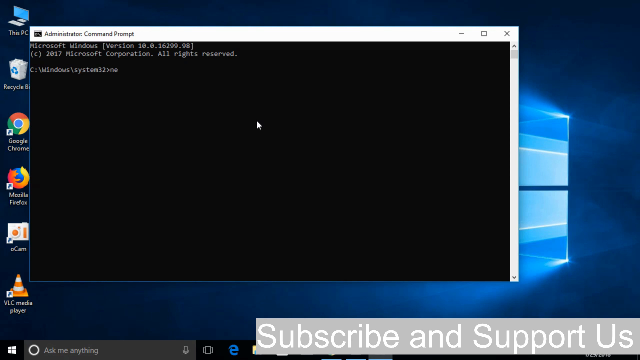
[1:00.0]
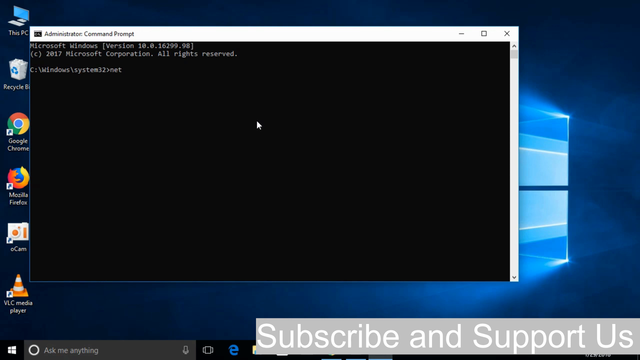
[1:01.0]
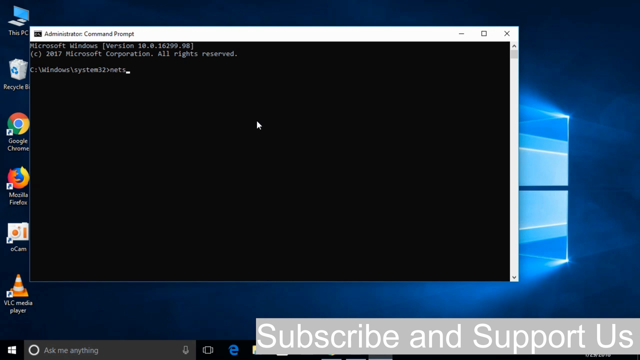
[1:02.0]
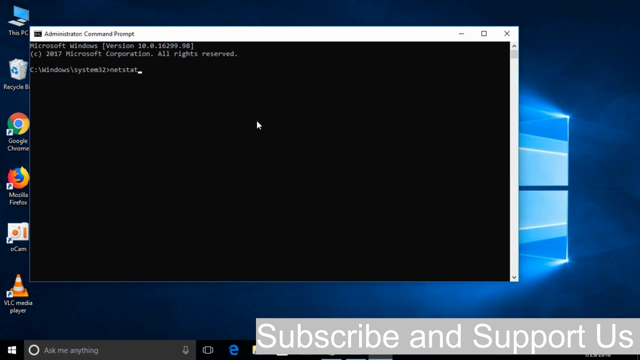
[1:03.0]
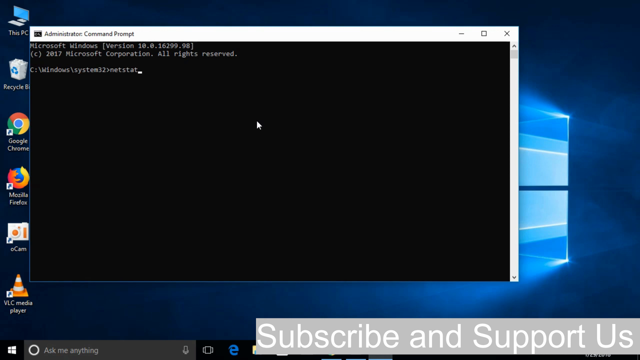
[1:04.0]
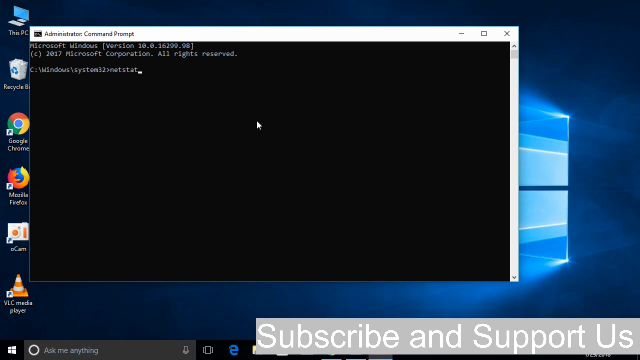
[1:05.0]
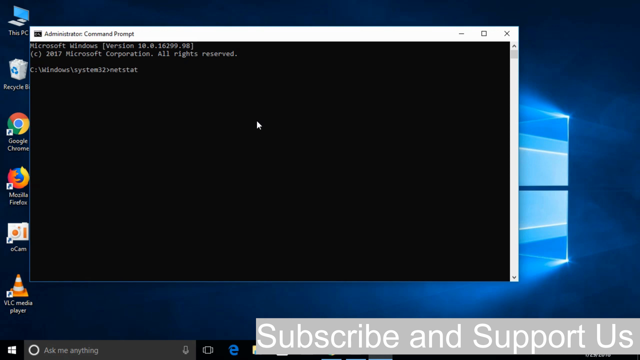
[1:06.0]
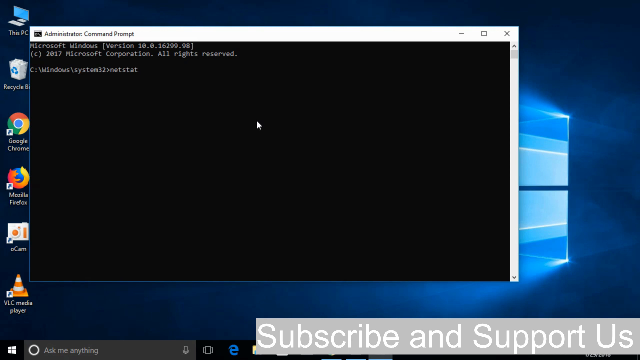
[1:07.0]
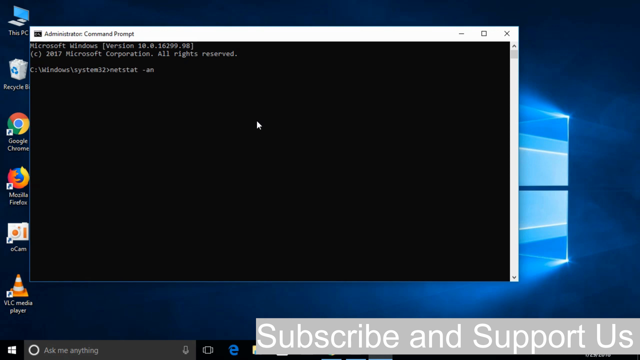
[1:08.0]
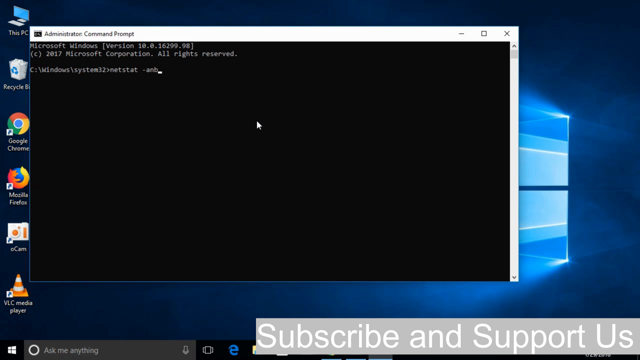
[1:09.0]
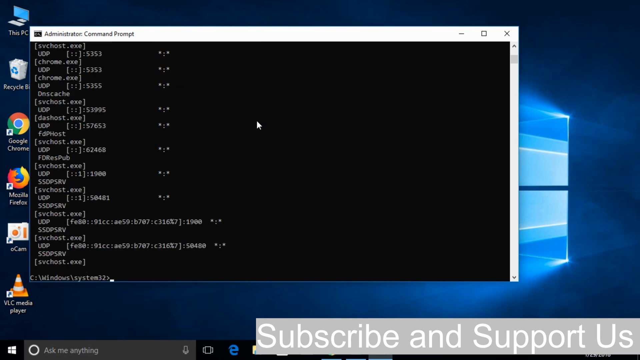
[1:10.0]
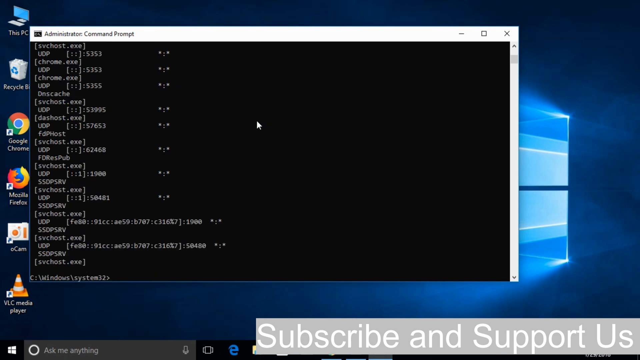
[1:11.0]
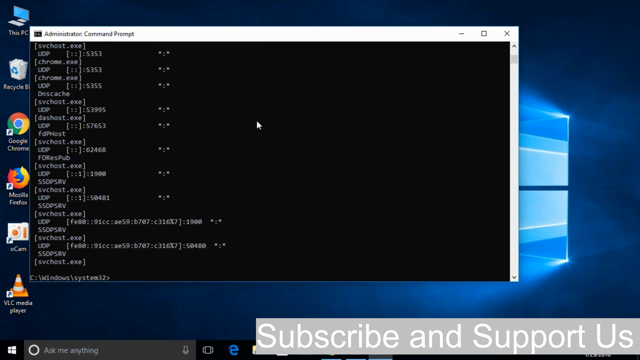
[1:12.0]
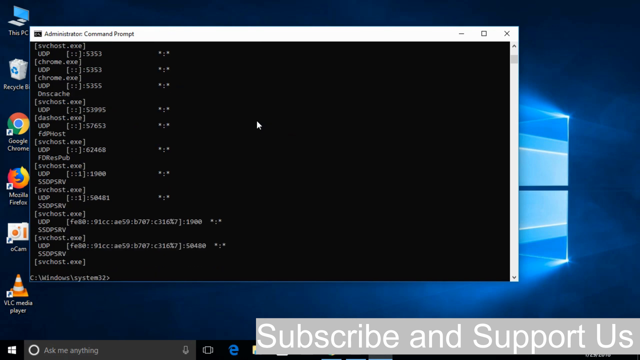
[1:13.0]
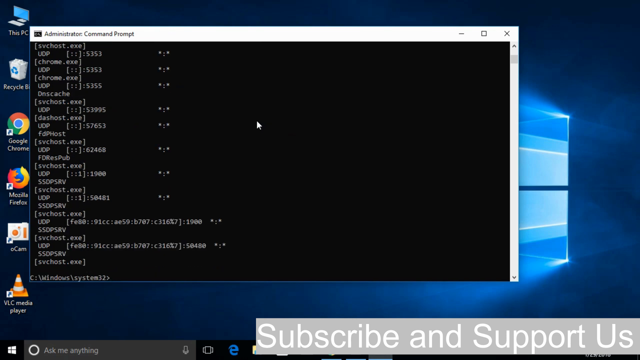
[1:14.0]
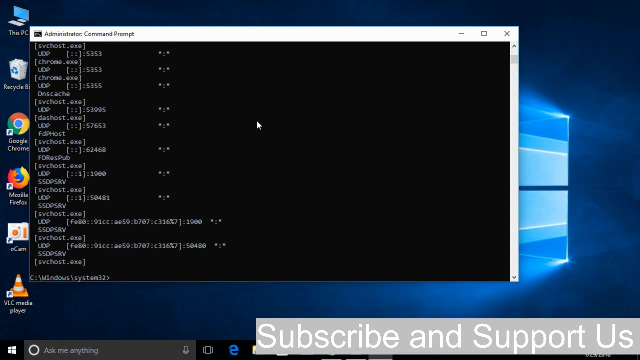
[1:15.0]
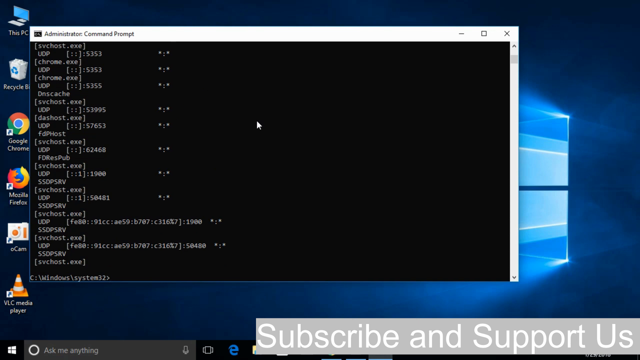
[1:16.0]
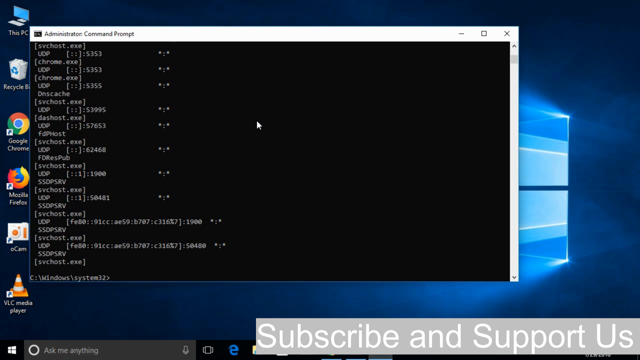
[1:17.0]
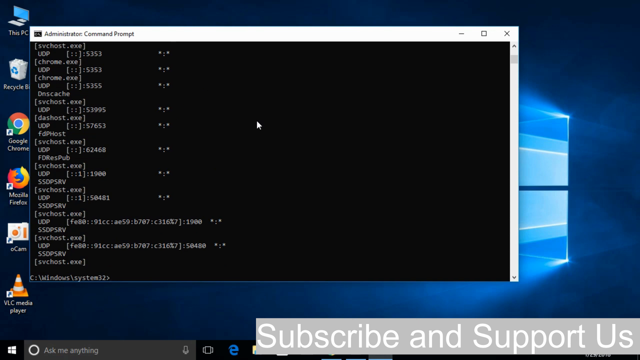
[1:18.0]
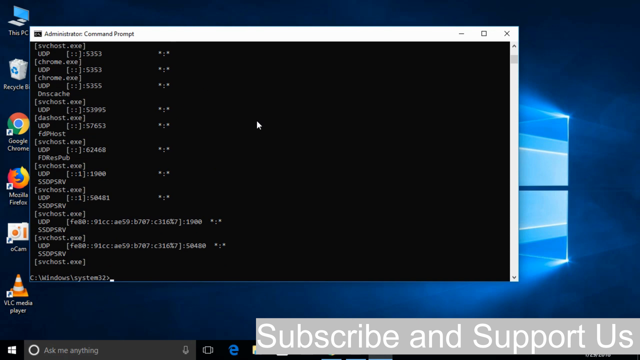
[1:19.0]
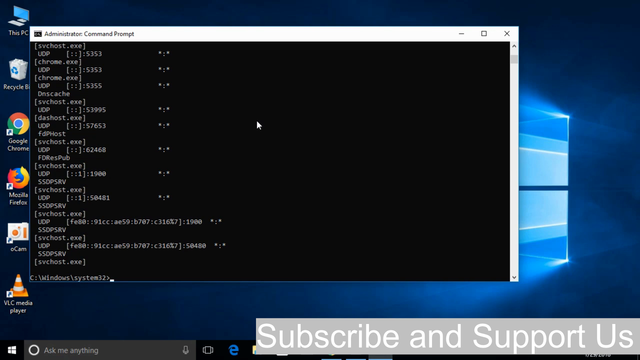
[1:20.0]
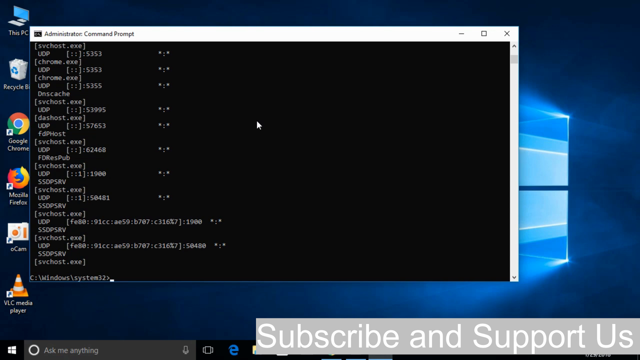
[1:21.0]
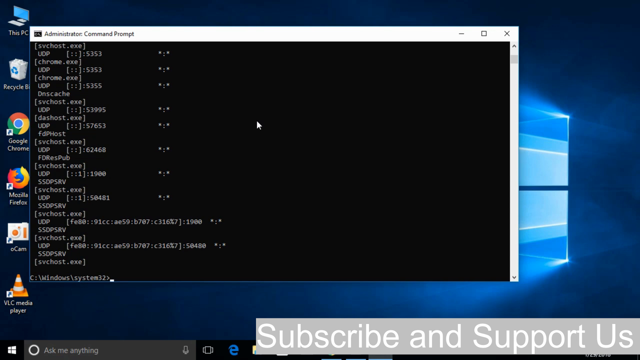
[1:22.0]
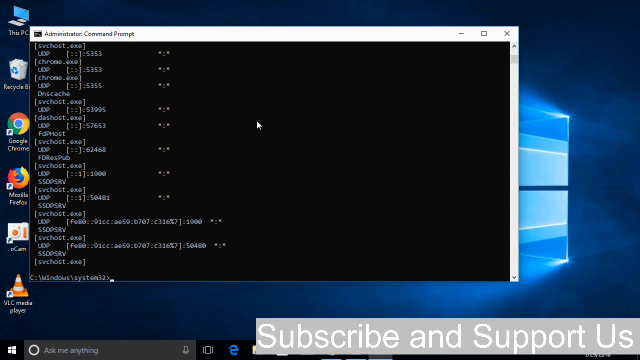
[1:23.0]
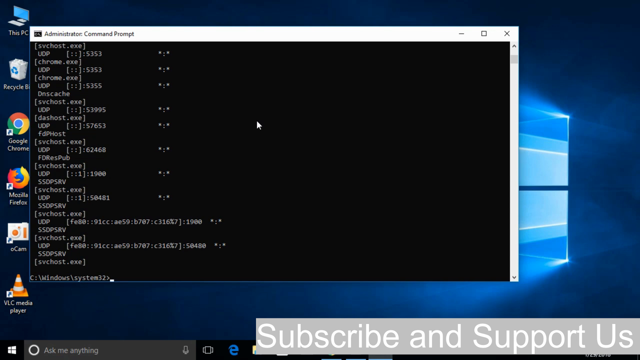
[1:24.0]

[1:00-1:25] The footage seems to be the same as at the beginning, with editing. The content relates to coding and phishing, and a background is visible.